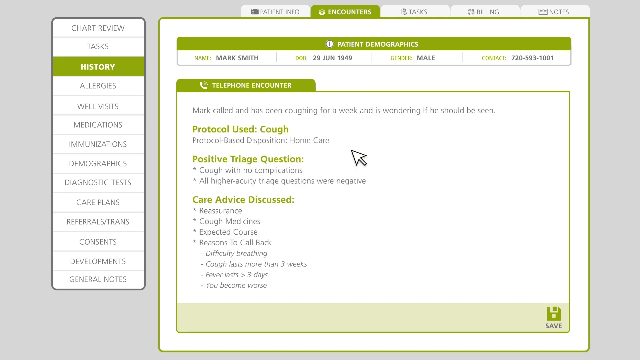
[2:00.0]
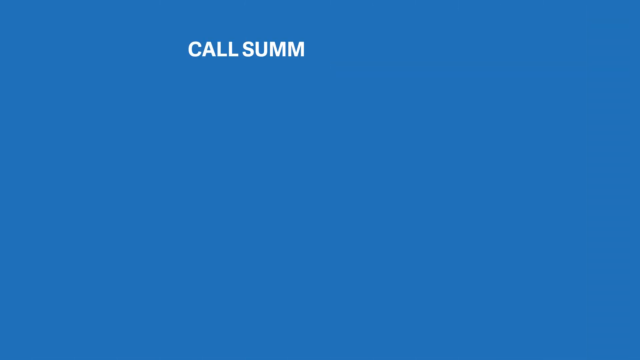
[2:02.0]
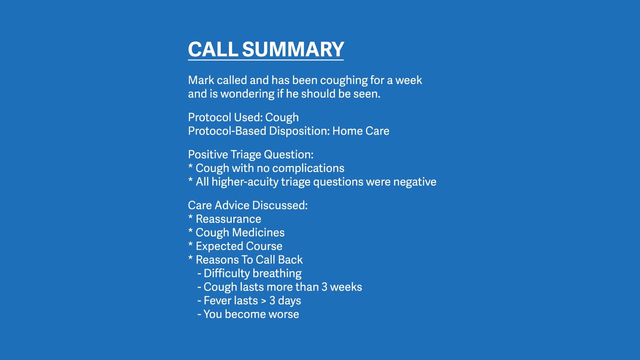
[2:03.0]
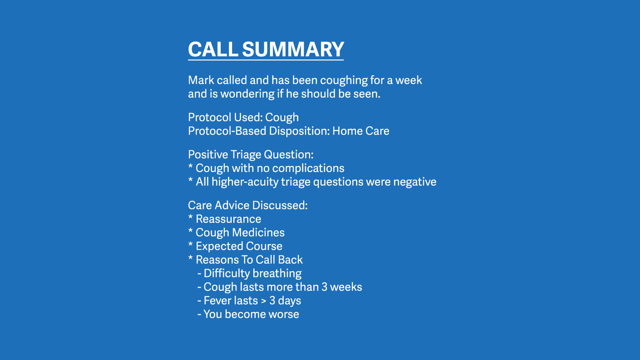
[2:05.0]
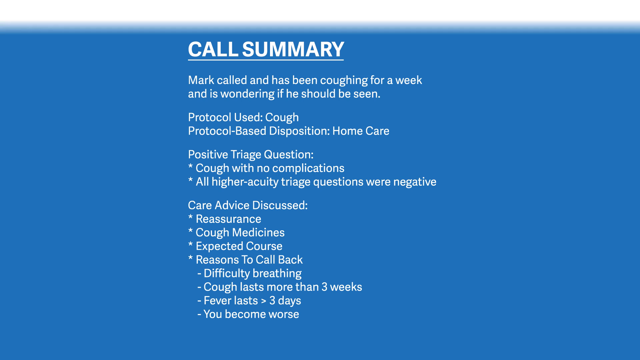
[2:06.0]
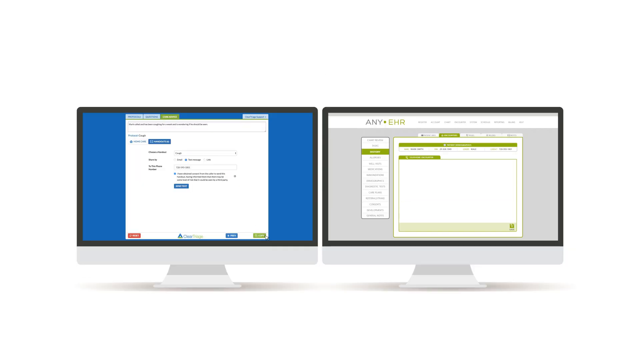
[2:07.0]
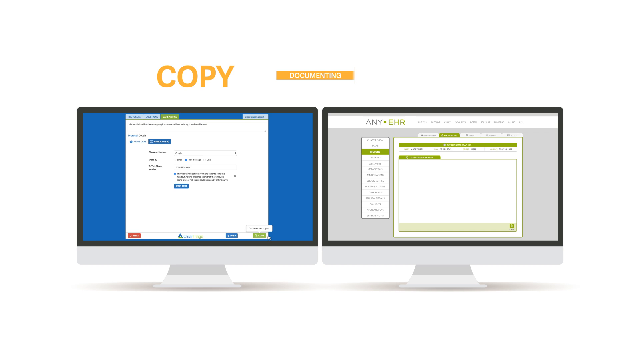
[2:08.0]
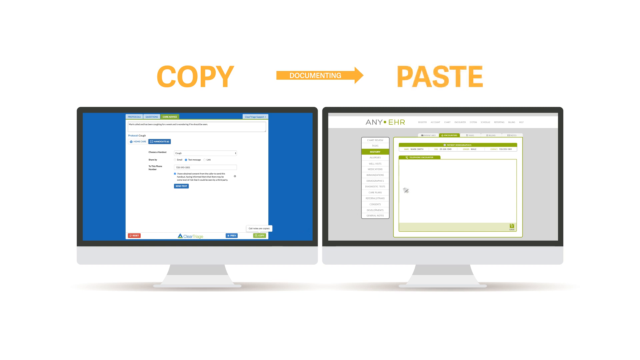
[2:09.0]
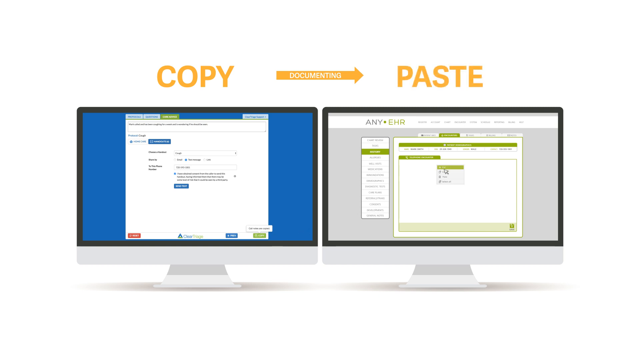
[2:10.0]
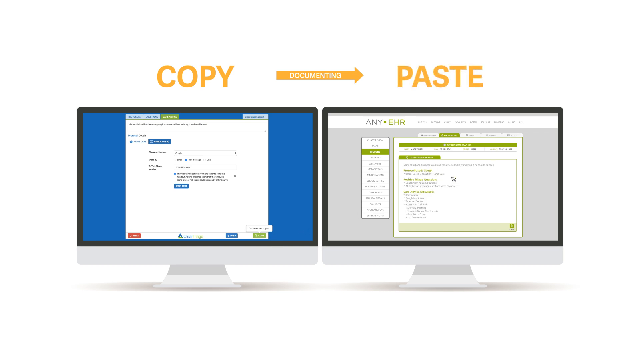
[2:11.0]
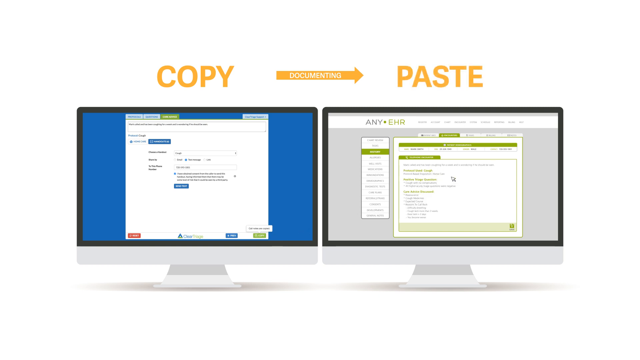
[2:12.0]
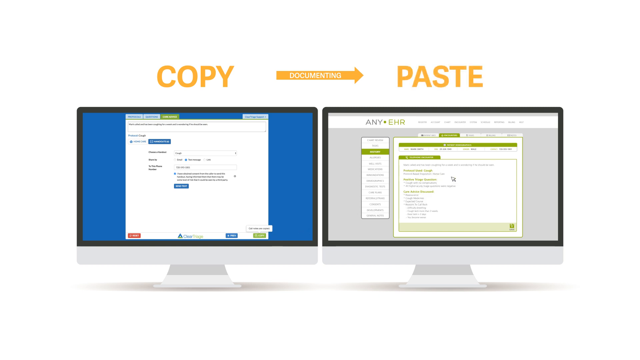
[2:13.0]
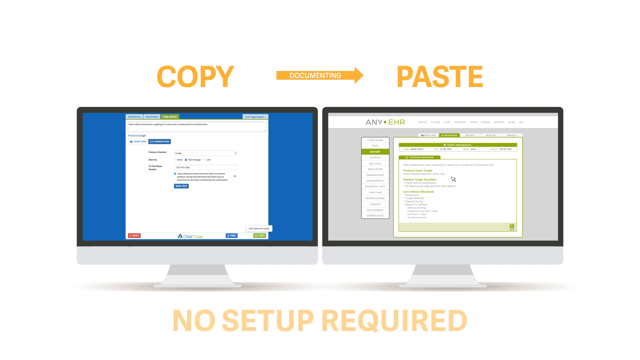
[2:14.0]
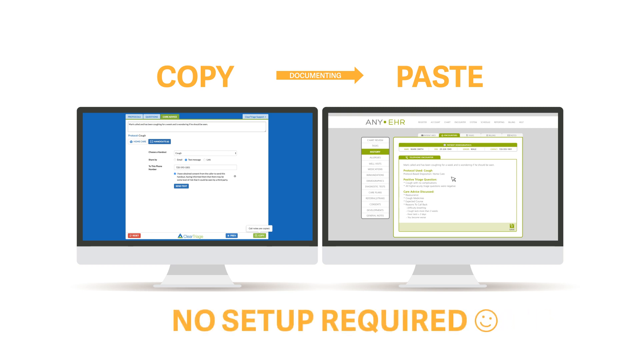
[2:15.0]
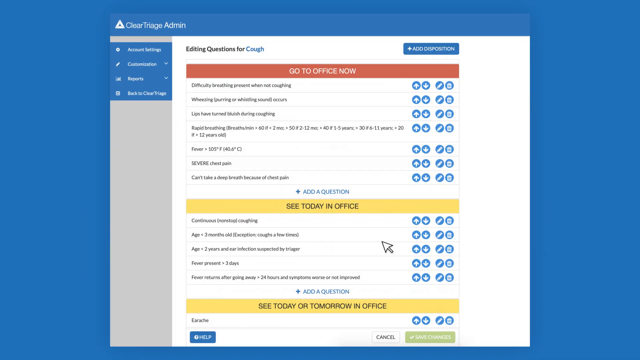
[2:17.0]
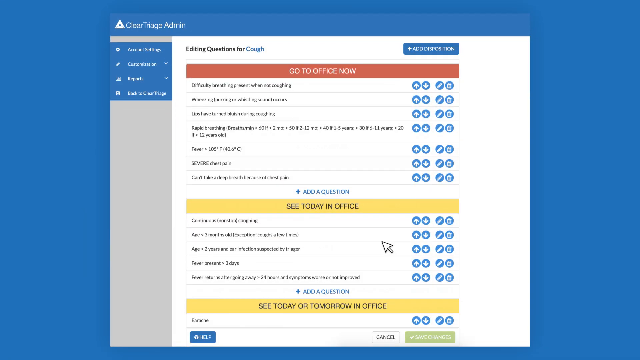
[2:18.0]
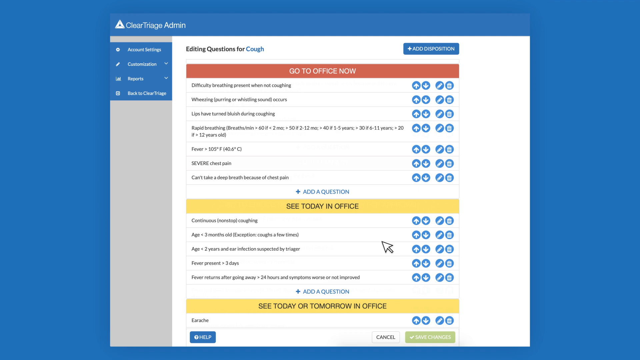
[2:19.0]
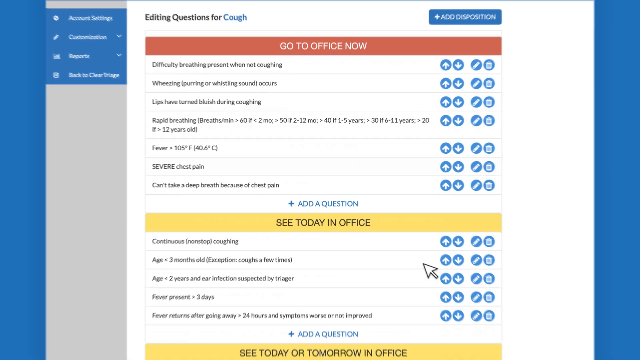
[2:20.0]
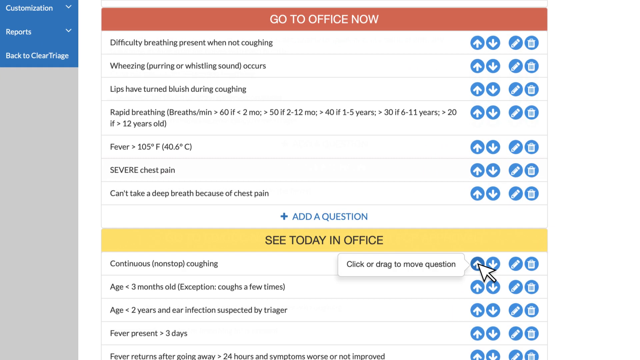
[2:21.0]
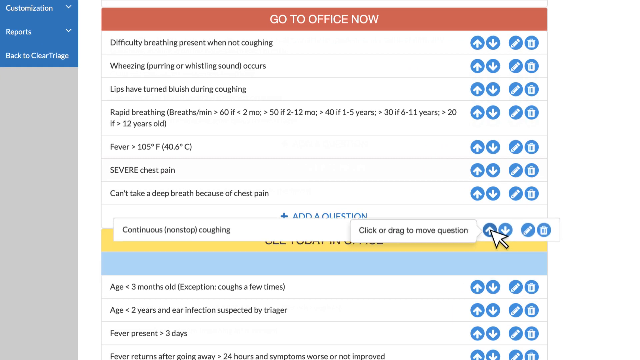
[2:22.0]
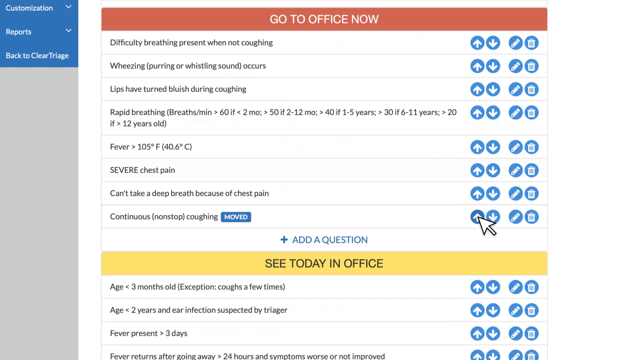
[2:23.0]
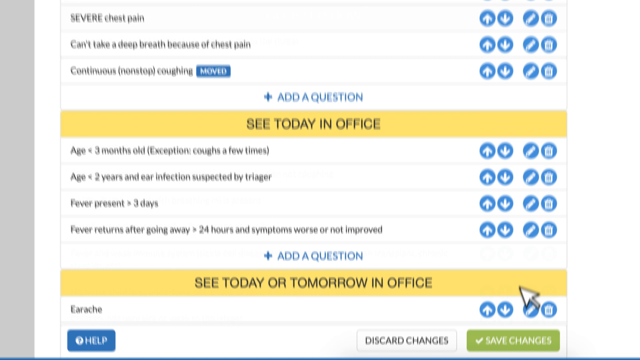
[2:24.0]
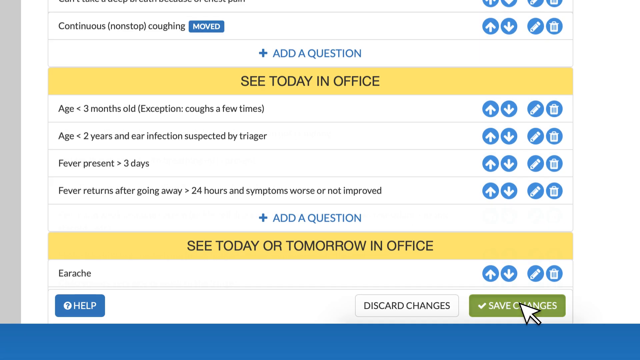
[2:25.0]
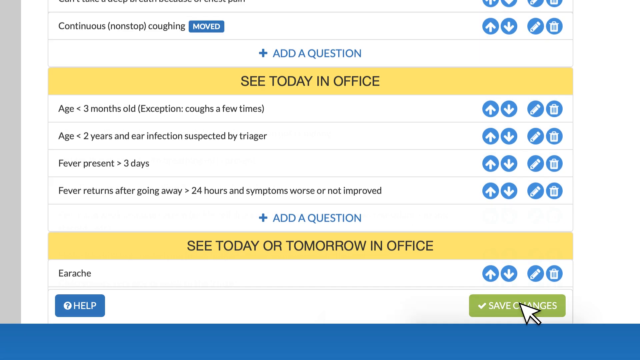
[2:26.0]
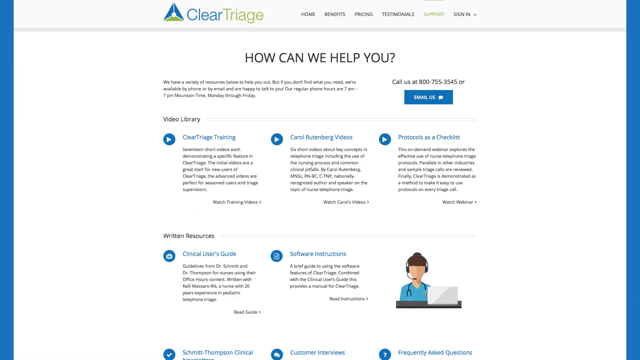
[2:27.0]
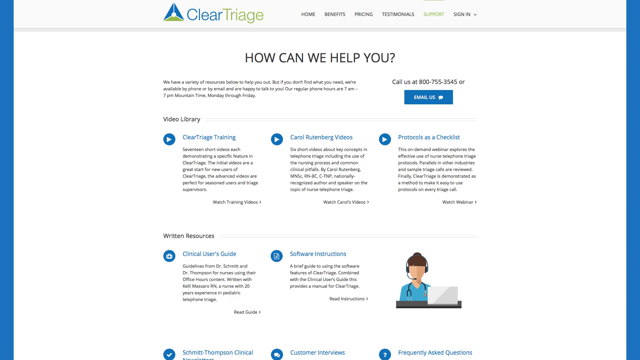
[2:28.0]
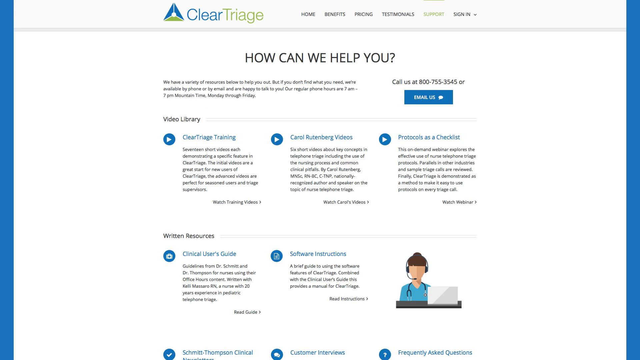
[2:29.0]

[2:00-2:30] A computer screen shows several tabs at the top, with the "encounters" tab, the second of five, open. The tabs read "pacing intro", "encounters", "task", "billing" and "notes". On the open tab, green letters read "protocol used, cough", then "positive triage questions", then "care advice discussed". A computer arrow is on the screen. The view switches to a blue screen that says "call summary" and "Mark called", followed by text that cannot be read. It then switches to two computer screens side by side, one with a blue background and "copy" above it. An orange arrow points to the word "paste" above the screen on the right; "copy" and "paste" are in orange. The cursor selects something on the second screen, and below it at the bottom "no setup required" appears in orange letters. Another screen pops up, and the view zooms in on a middle part that says "to see today in office". At the bottom it says "save changes", and the mouse clicks on it.